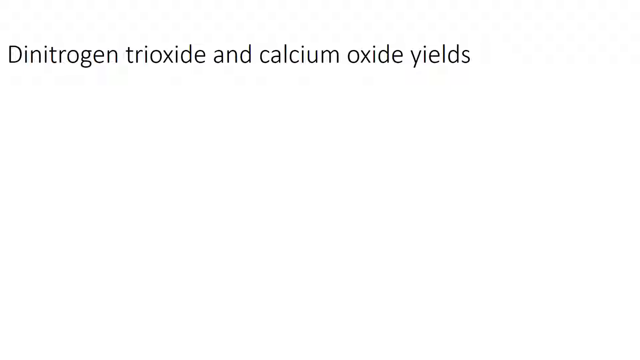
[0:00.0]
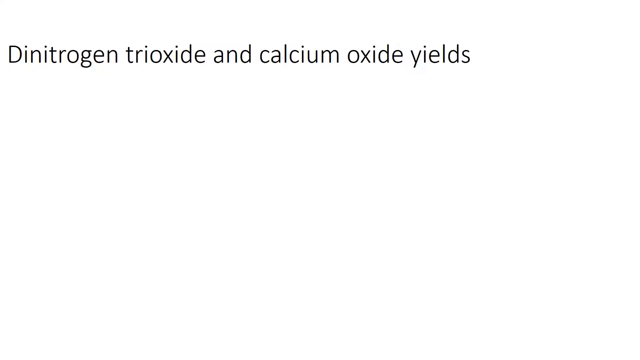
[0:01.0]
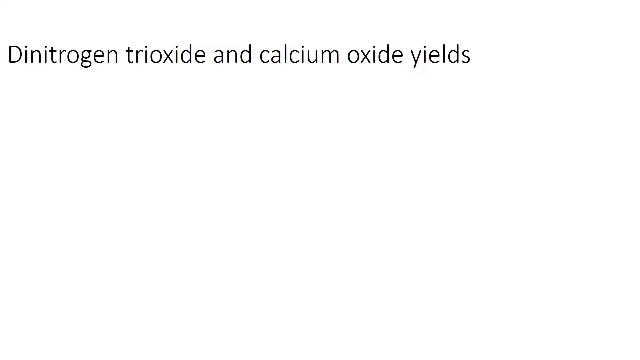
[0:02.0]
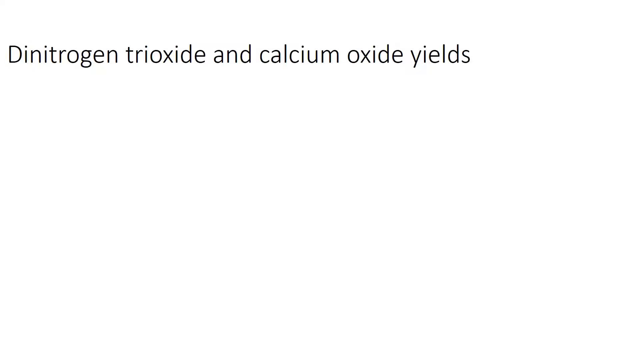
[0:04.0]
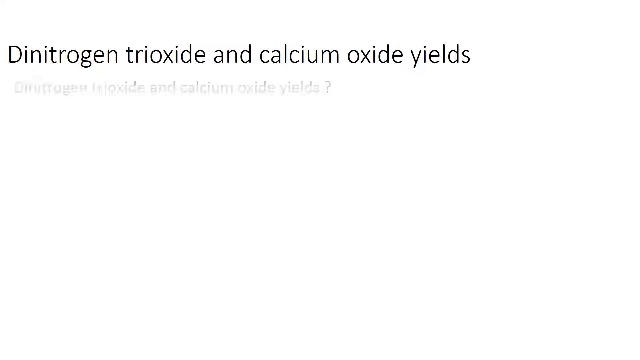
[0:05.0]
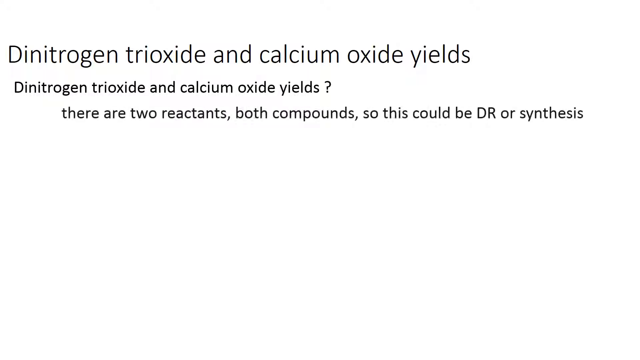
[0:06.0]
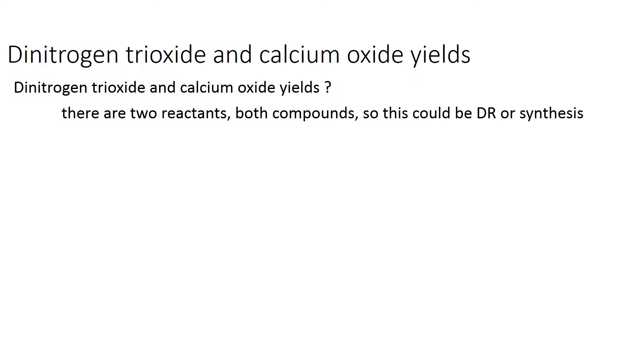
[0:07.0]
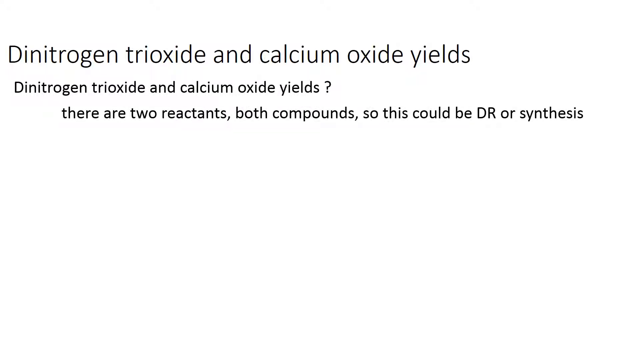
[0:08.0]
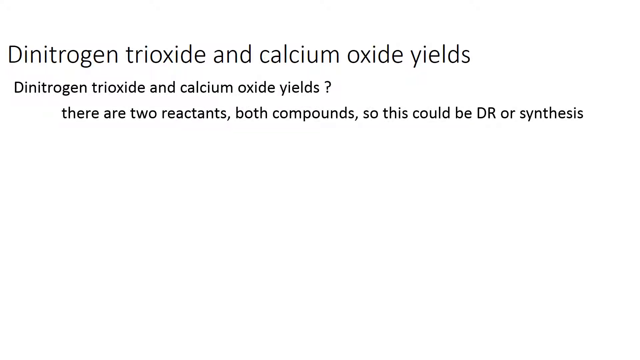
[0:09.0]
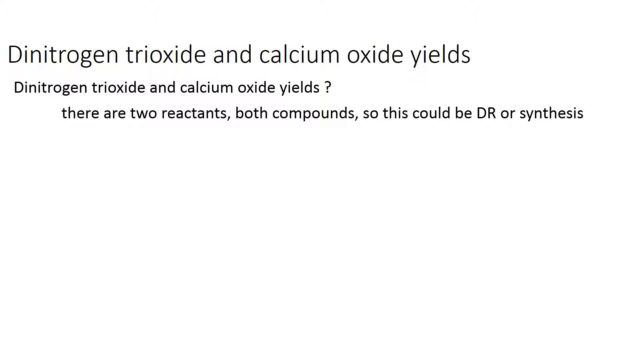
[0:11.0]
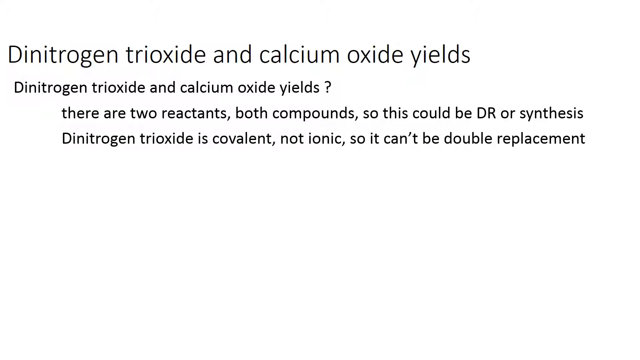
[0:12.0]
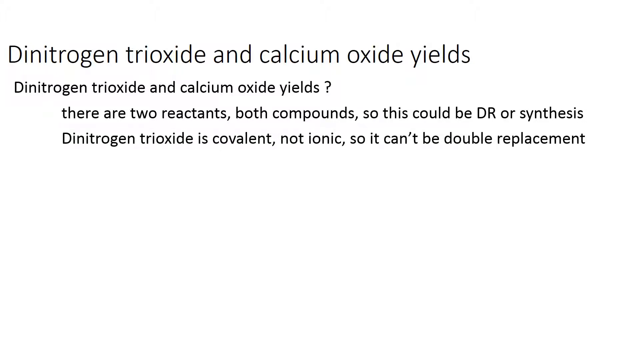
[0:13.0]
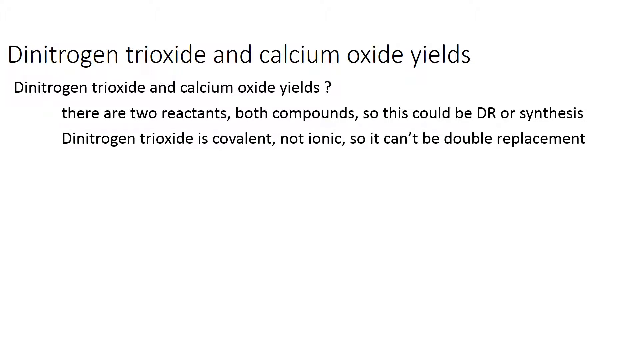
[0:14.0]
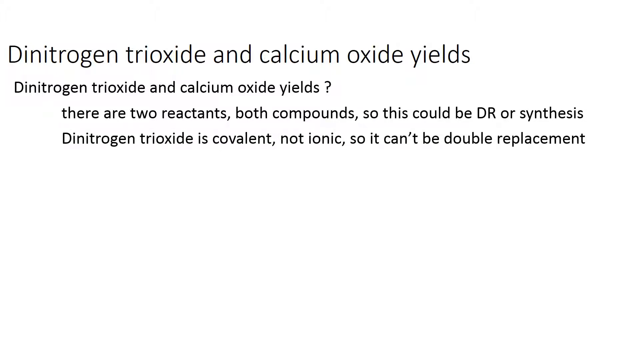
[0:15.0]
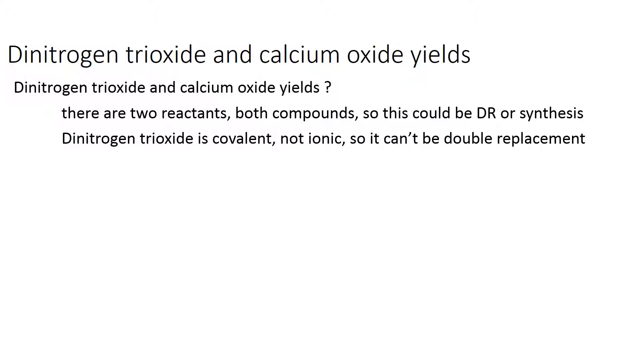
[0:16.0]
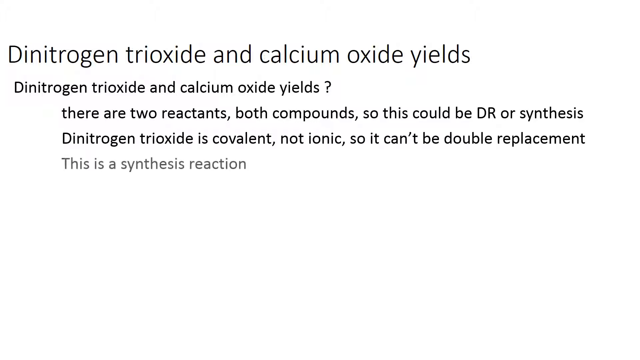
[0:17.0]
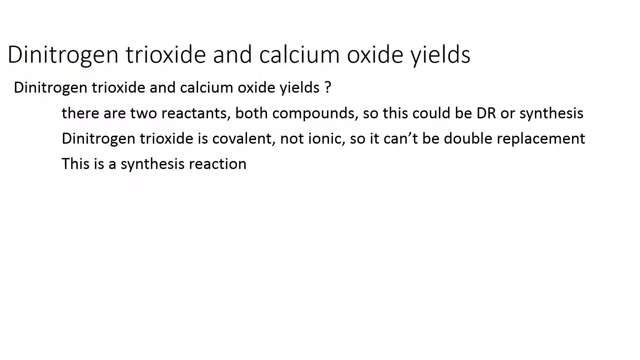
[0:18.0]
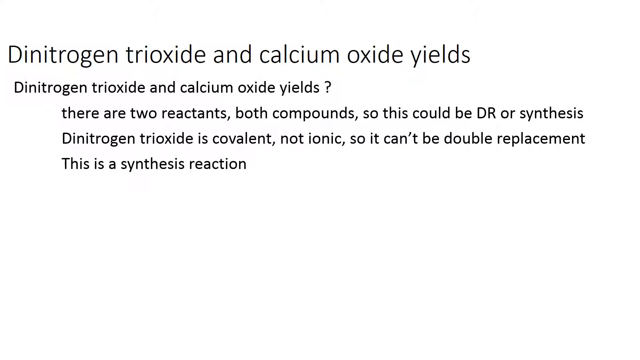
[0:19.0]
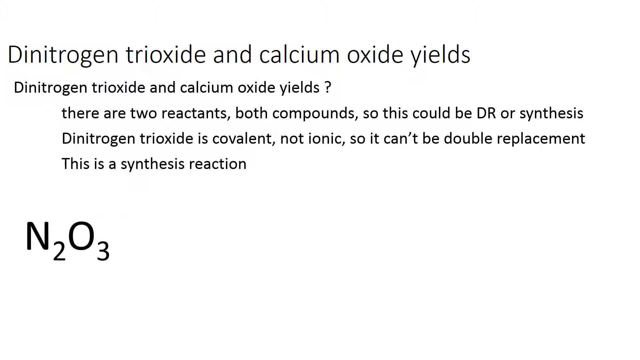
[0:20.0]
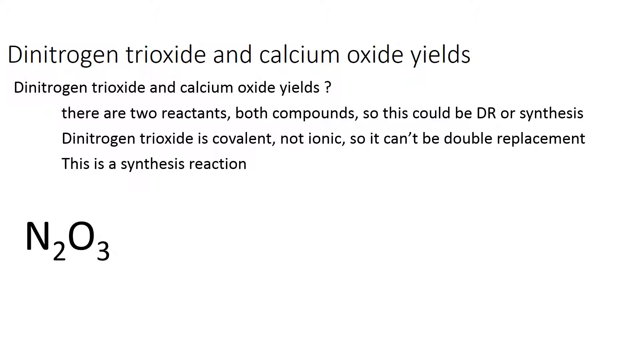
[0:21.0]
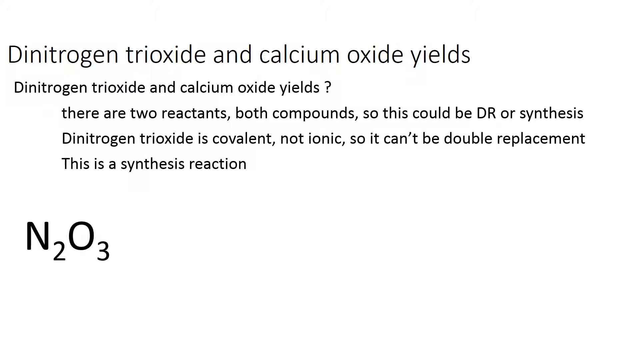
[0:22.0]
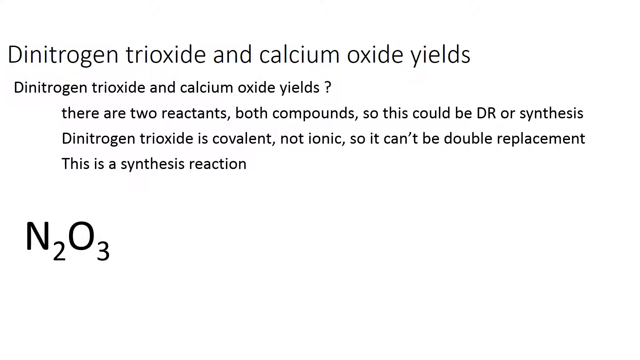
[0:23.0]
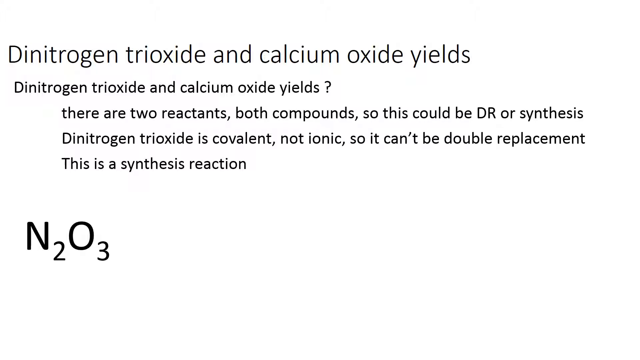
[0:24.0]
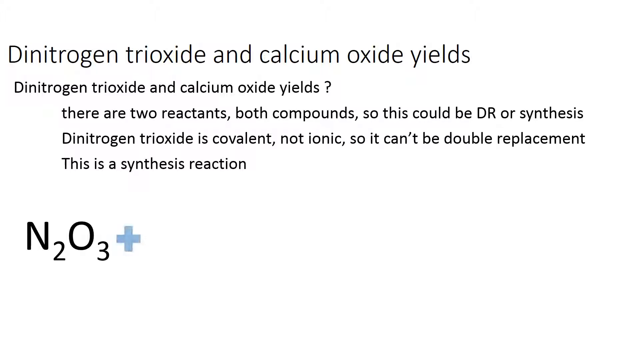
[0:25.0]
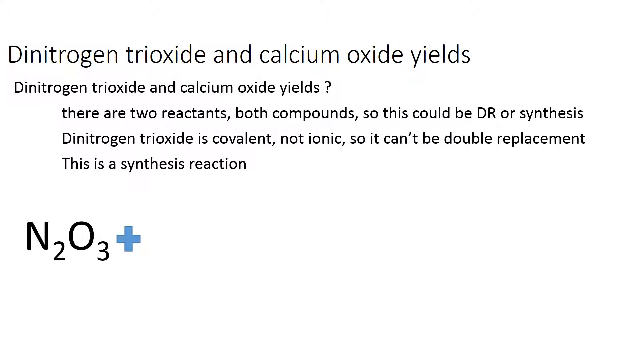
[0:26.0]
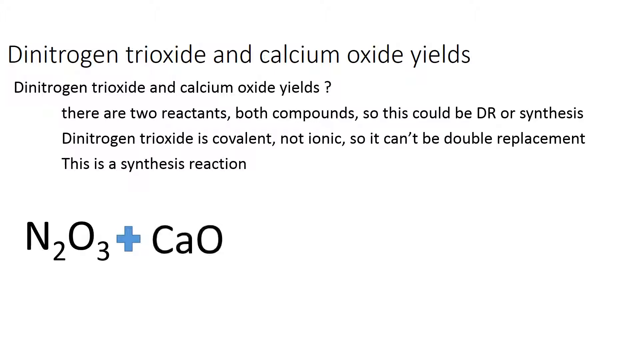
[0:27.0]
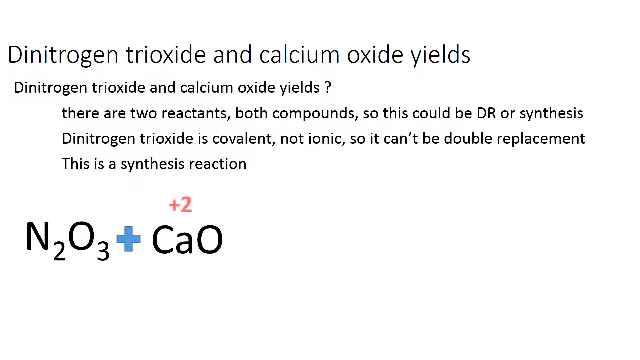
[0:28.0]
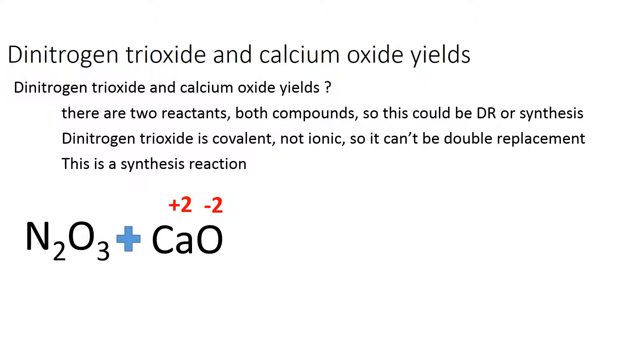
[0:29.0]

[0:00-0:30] The background is white. At the top is black text that says "Dinitrogen trioxide and calcium oxide yields." Beneath it, smaller black text appears that says "Dinitrogen trioxide and calcium oxide yields?" and beneath that a line of text says "There are two reactants, both compounds, so this could be DR or synthesis." These lines are all in black. A new line of black text appears beneath them: "Dinitrogen trioxide is a covalent, not ionic, so it can't be double replacement." Beneath that, a line appears that says "This is a synthesis reaction." In the lower left corner, black text appears that says "N2O3." A blue + mark appears to the right of it, followed by black text that says "CaO." Above the "CaO" text, red text appears that says "+2" and "-2."